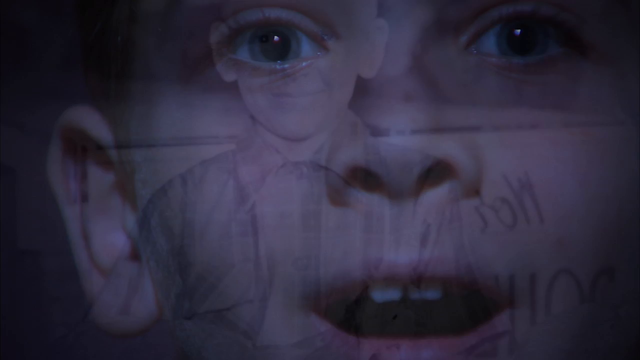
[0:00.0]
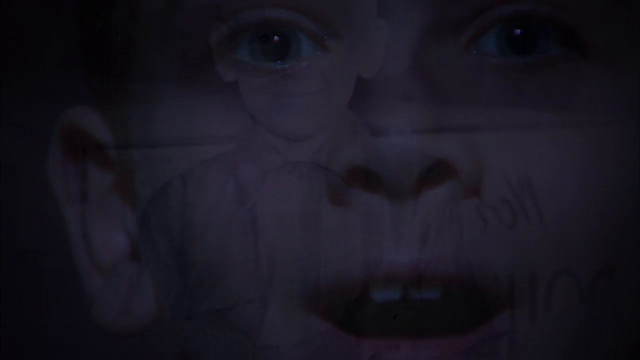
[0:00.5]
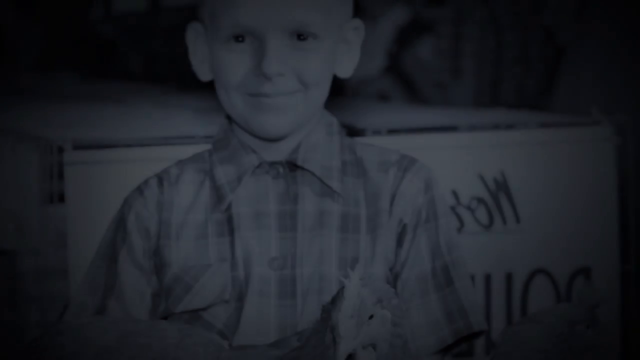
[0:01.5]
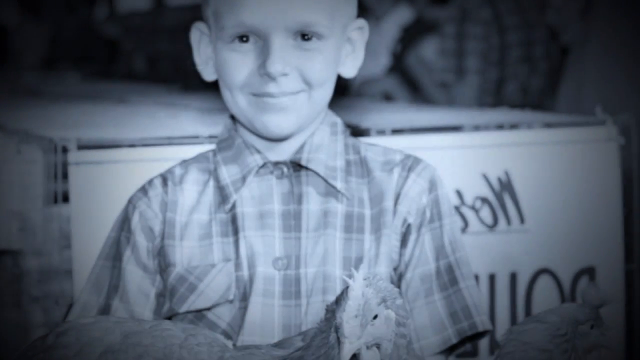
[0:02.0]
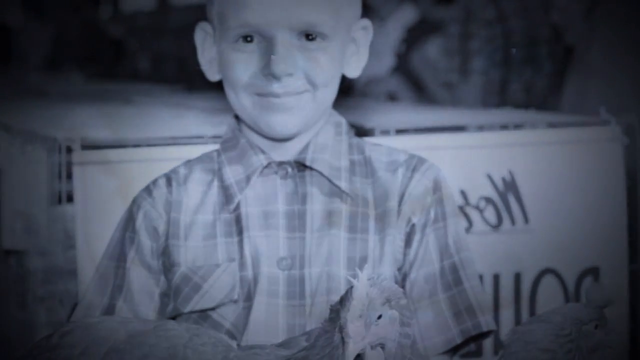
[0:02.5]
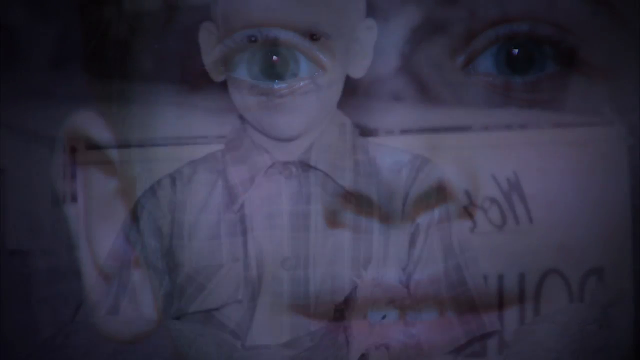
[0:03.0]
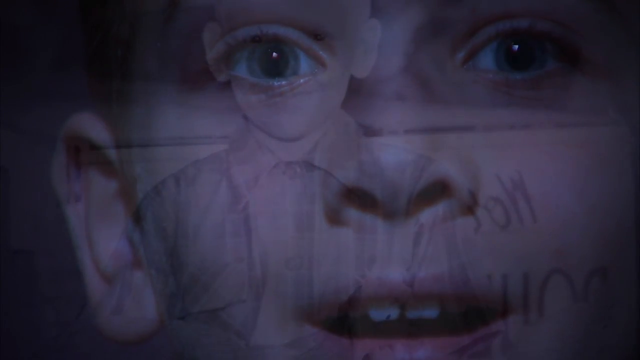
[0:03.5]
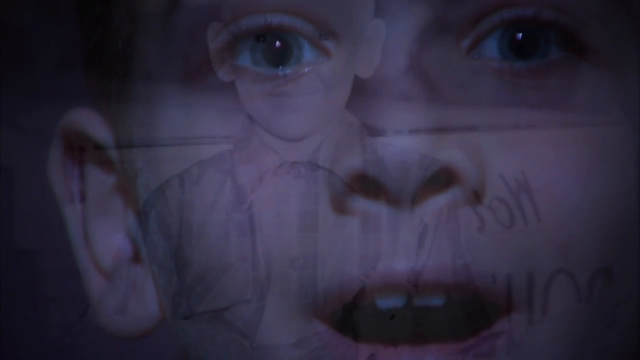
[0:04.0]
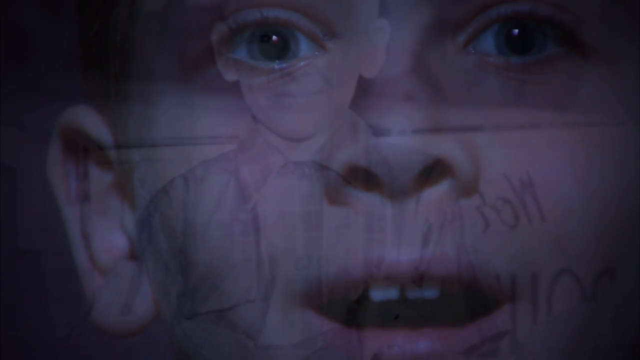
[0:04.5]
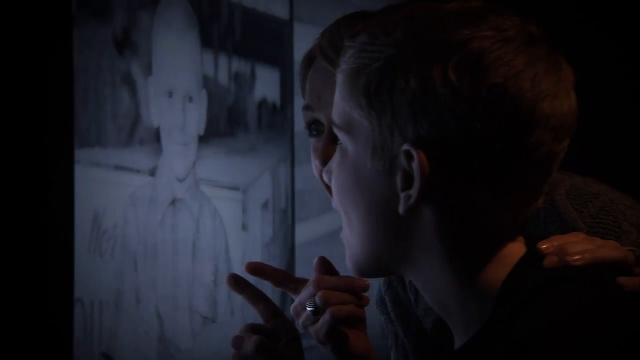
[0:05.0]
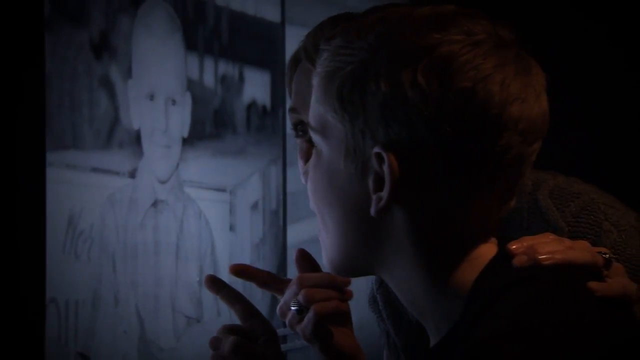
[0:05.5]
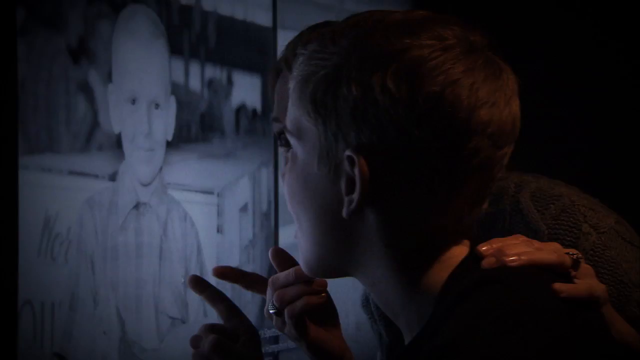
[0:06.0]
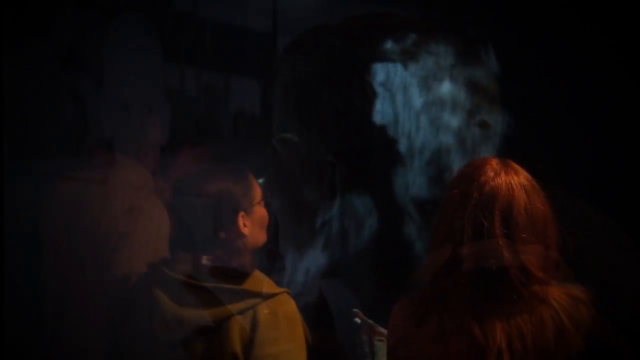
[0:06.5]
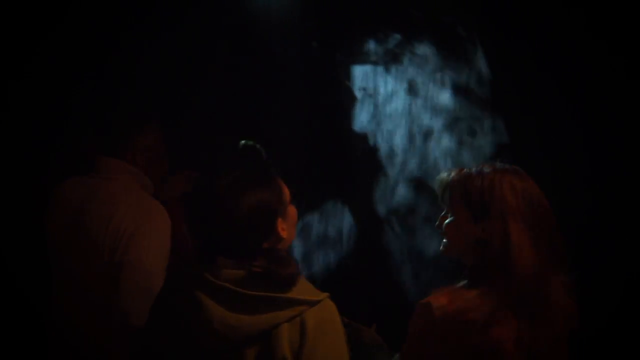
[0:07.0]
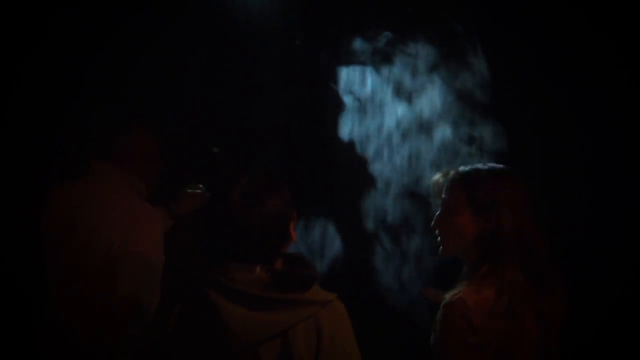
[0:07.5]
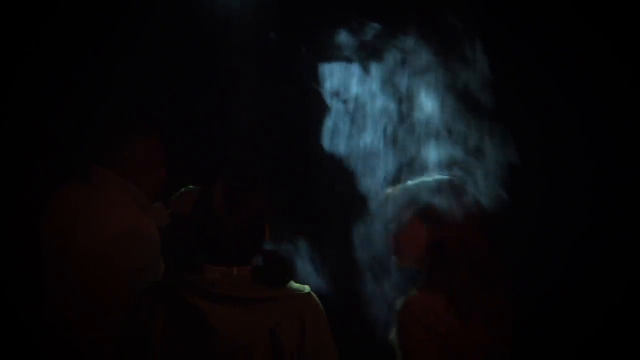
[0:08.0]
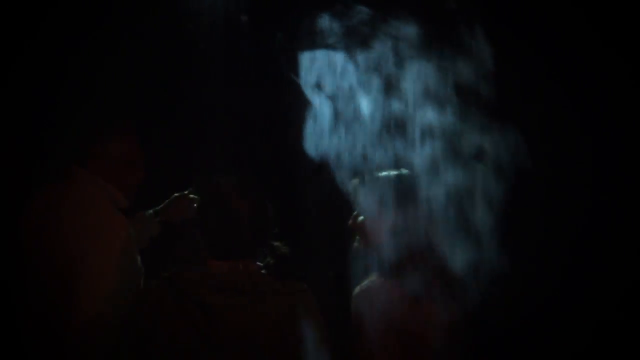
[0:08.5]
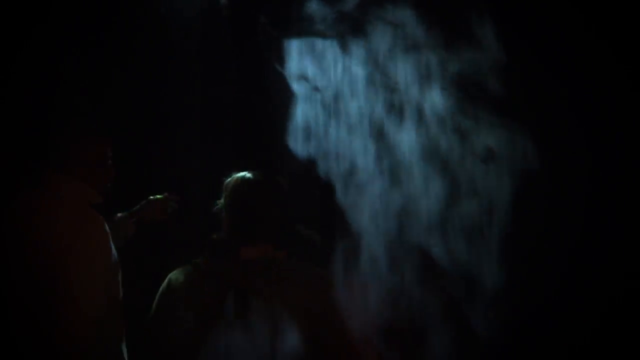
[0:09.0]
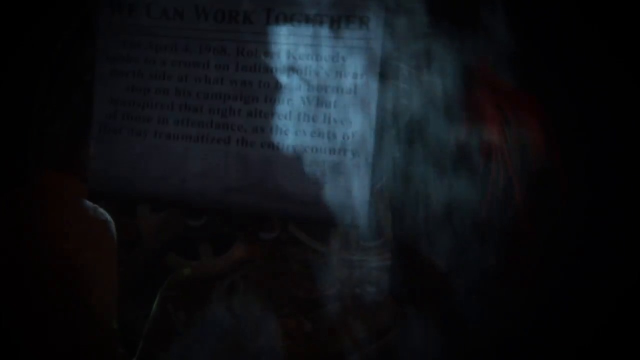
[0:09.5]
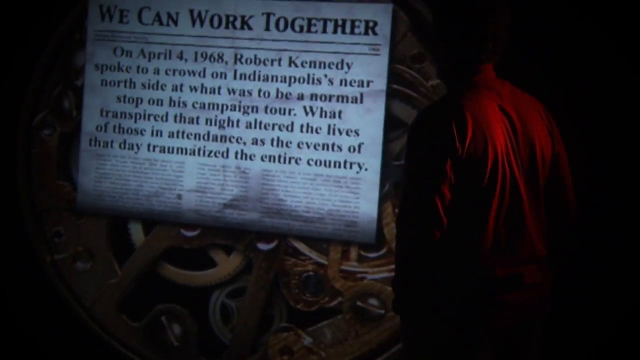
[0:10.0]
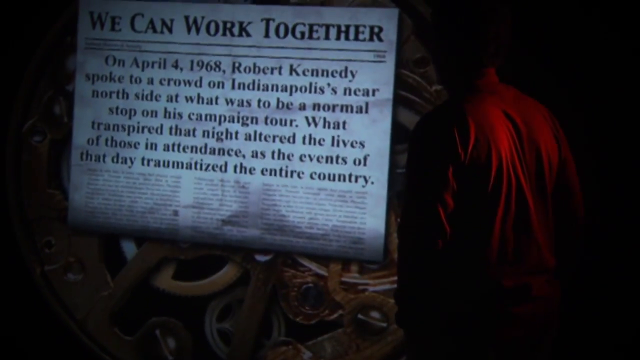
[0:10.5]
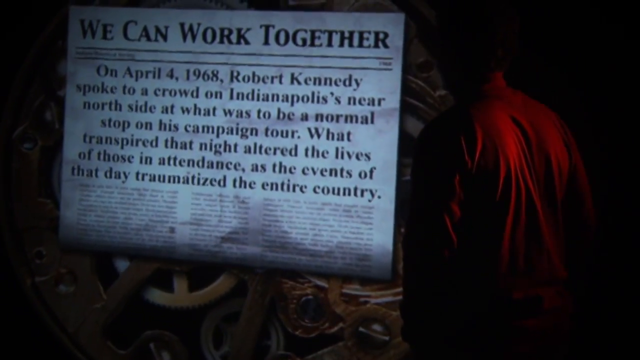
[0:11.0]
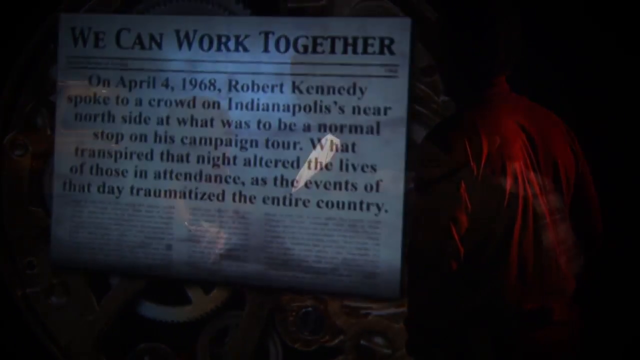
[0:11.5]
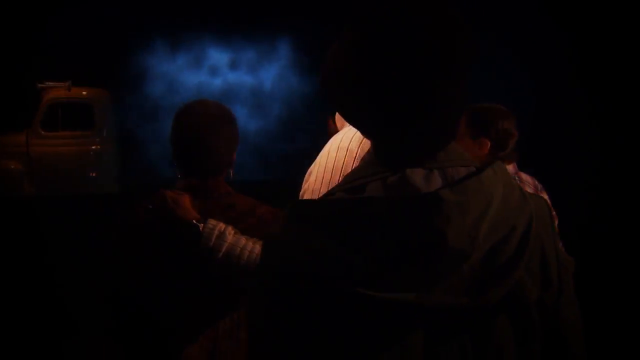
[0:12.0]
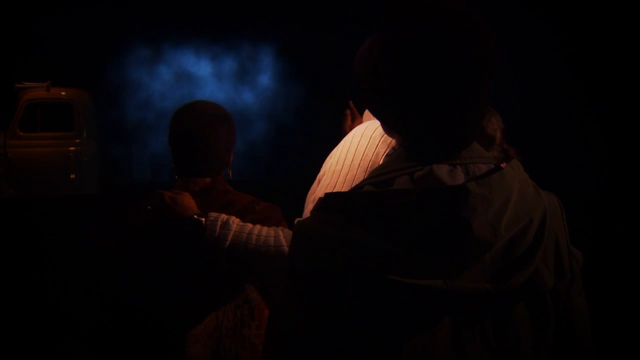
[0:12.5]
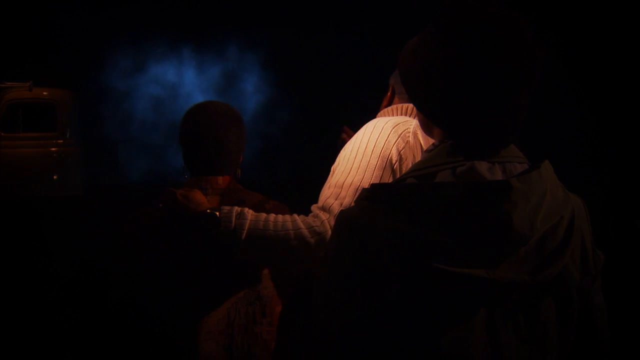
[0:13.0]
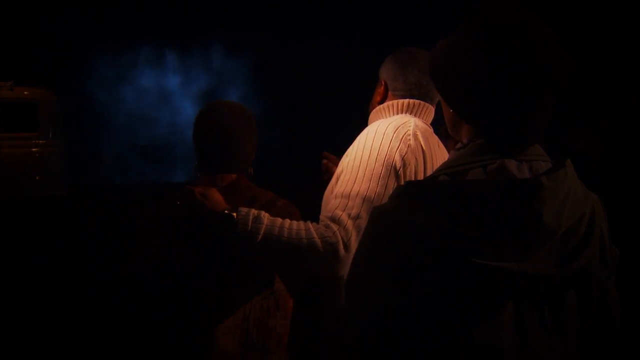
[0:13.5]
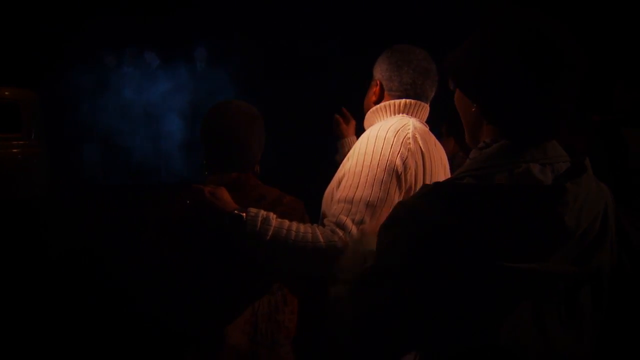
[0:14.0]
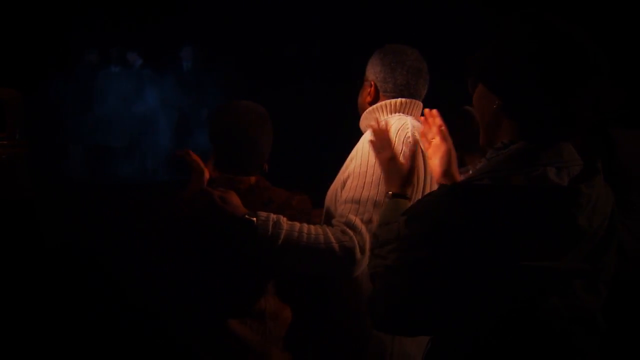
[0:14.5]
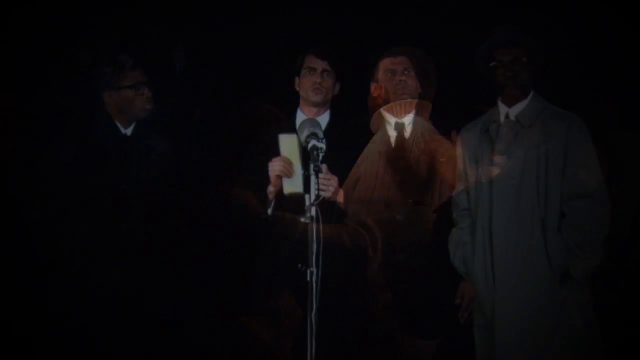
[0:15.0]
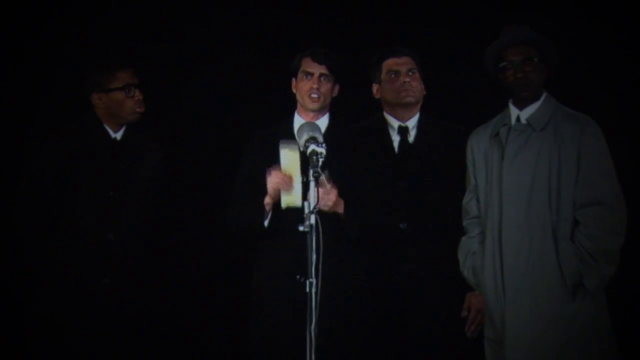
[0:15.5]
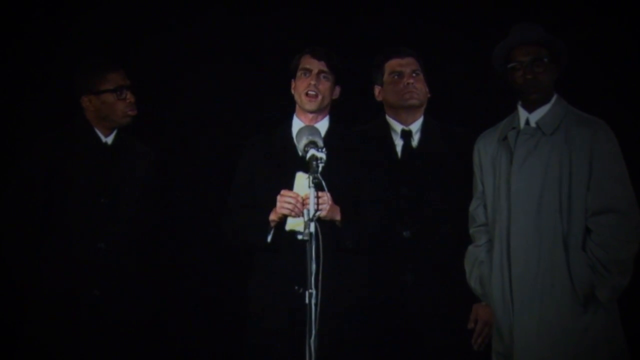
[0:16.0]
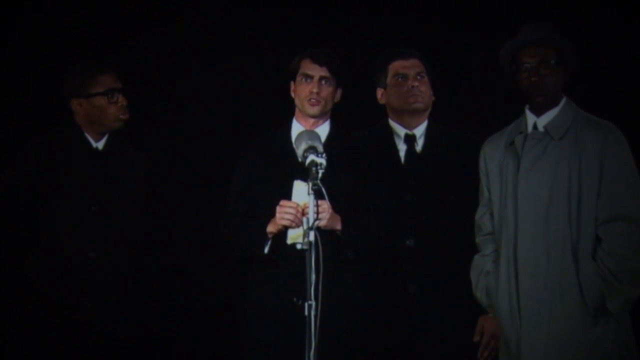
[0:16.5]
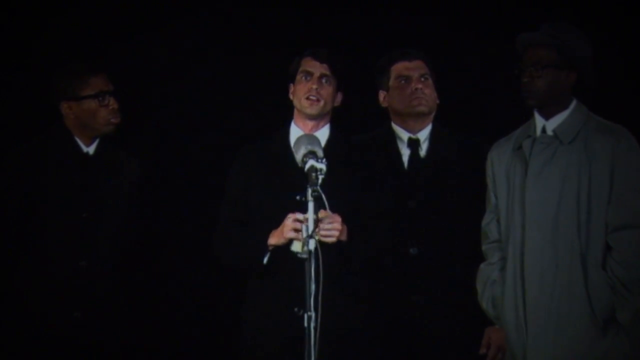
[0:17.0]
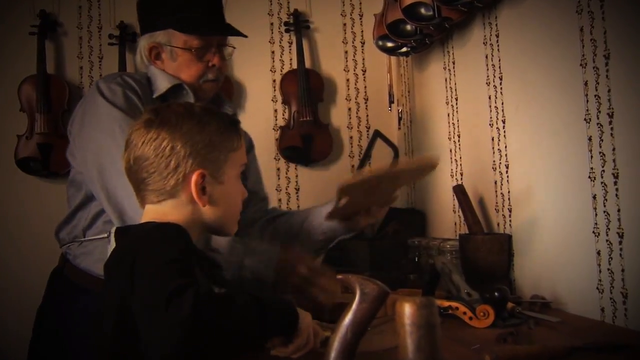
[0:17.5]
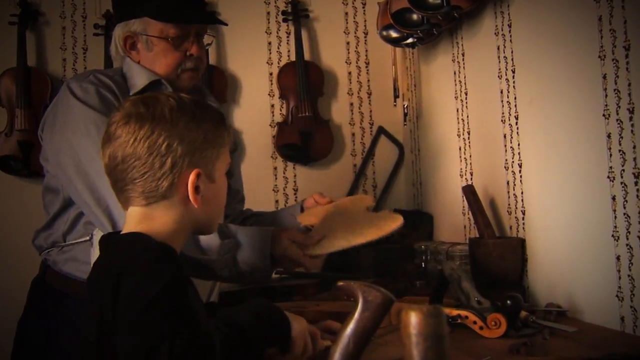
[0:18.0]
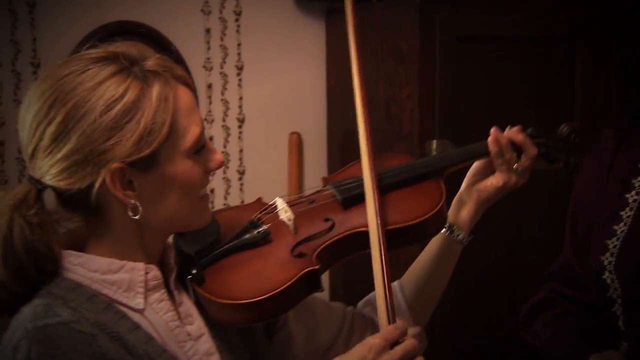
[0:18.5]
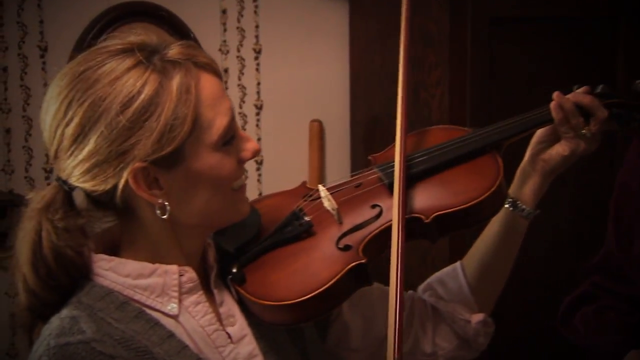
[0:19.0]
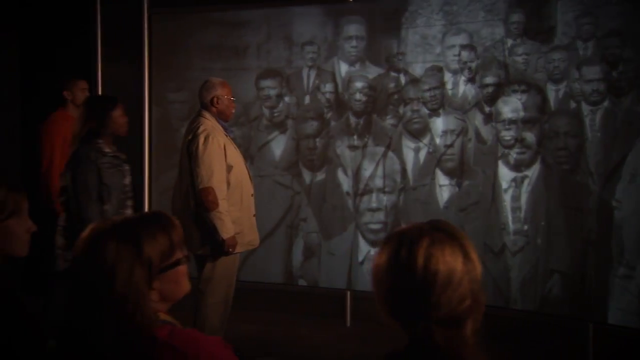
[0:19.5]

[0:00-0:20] A black and white image shows a young Caucasian boy standing in the middle of the screen, facing the camera. He has big ears and no facial hair, and wears a checker-patterned shirt buttoned all the way up. In the background there appears to be a box with cursive writing, and the text is in reverse. The camera pans slowly to the right, then cuts to an image overlaying the first one: a young Caucasian boy with black hair, his mouth slightly open, later opening it a little more. His eyes are gray and his face covers the entire screen. Next comes a picture of two people pointing at the picture of the bald-headed boy; they are looking at a screen that depicts him.